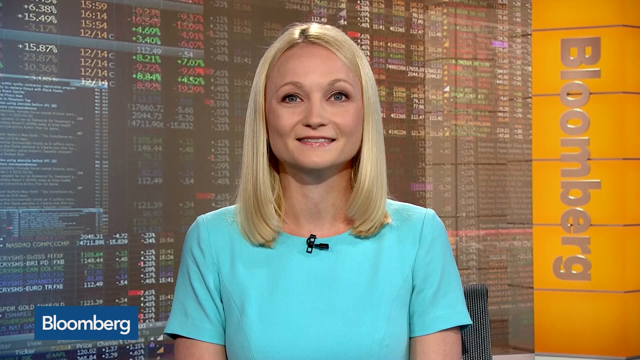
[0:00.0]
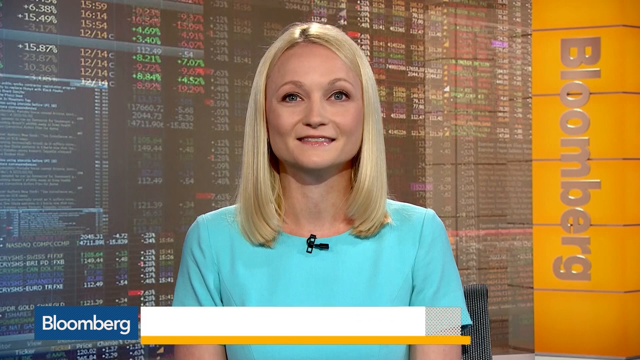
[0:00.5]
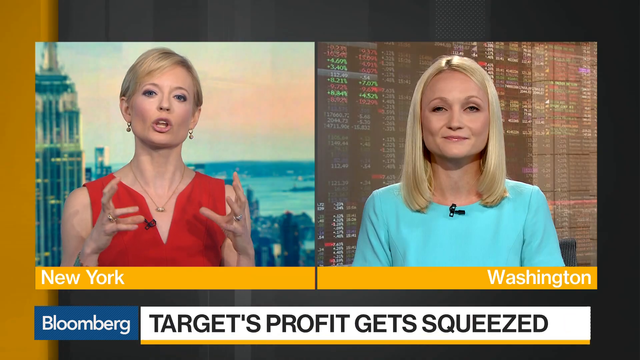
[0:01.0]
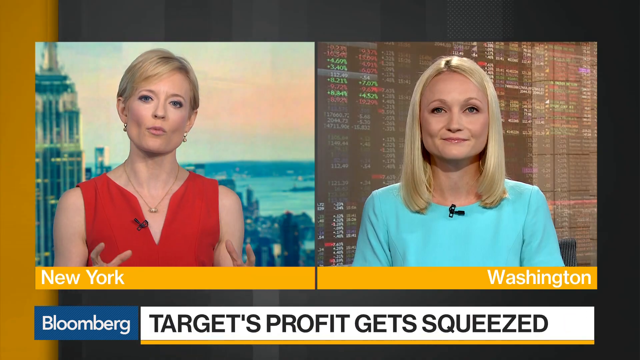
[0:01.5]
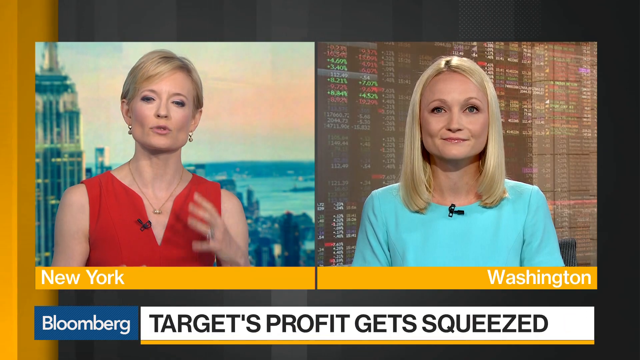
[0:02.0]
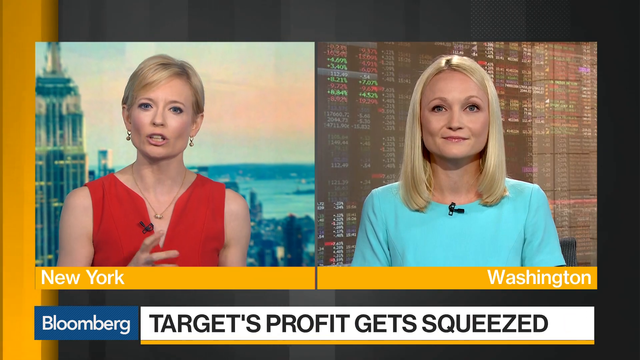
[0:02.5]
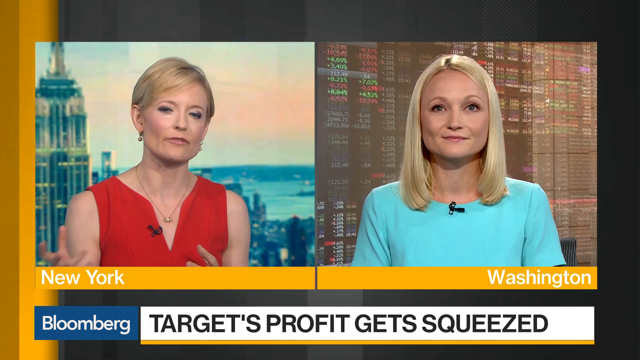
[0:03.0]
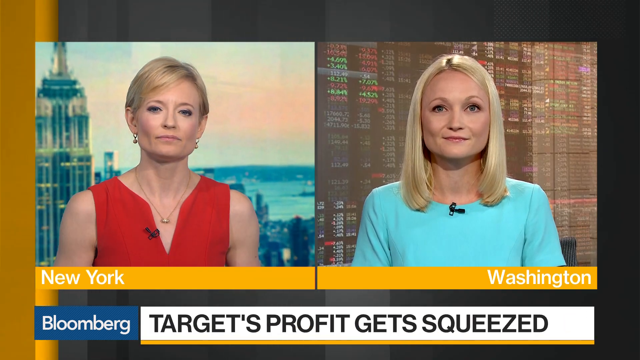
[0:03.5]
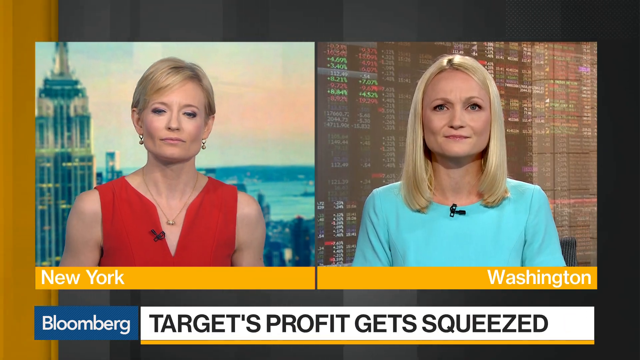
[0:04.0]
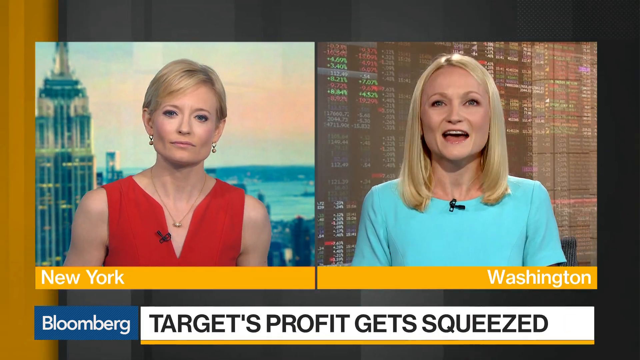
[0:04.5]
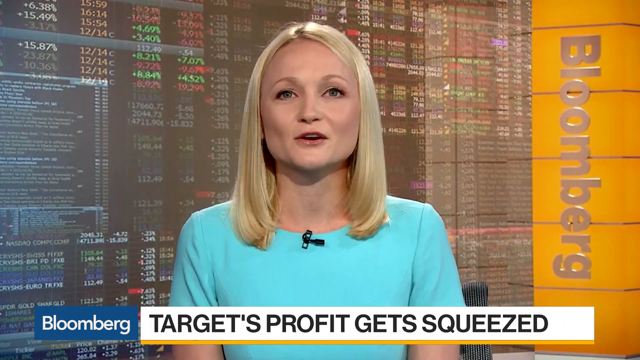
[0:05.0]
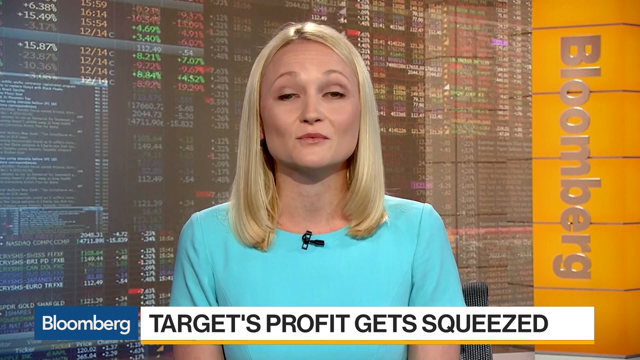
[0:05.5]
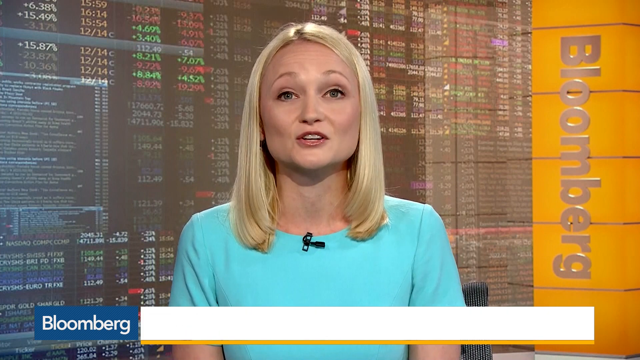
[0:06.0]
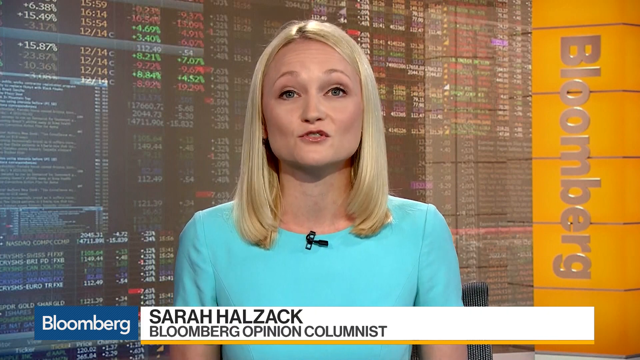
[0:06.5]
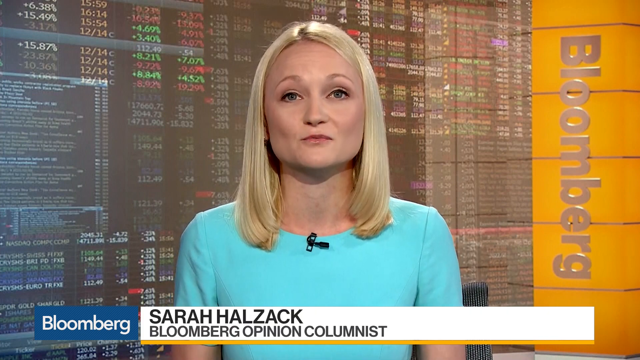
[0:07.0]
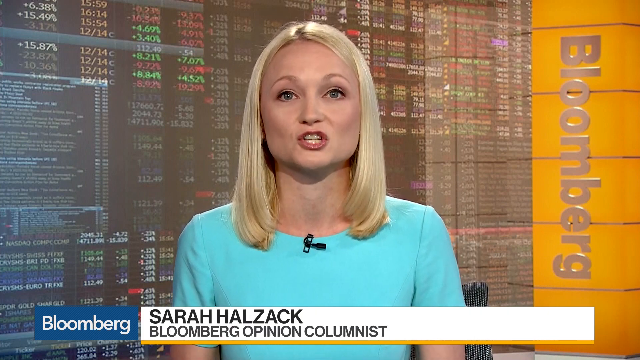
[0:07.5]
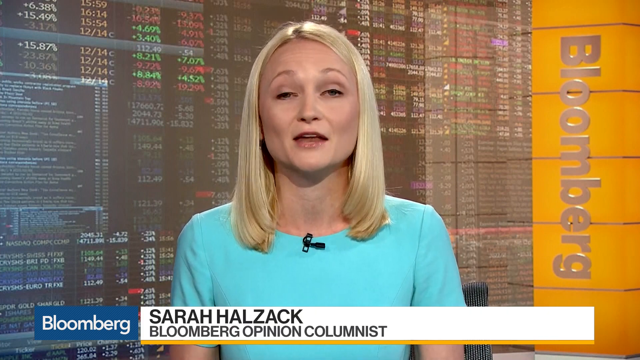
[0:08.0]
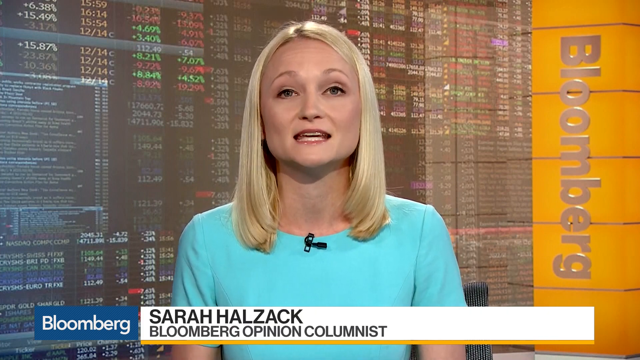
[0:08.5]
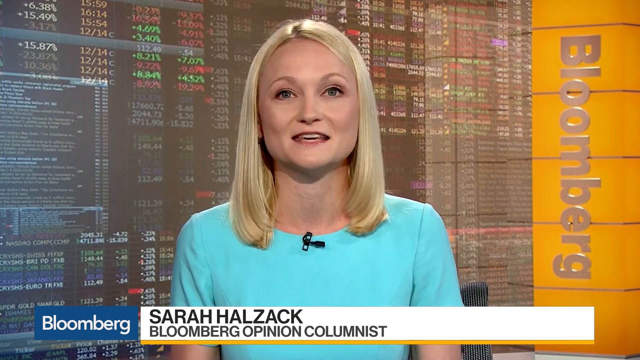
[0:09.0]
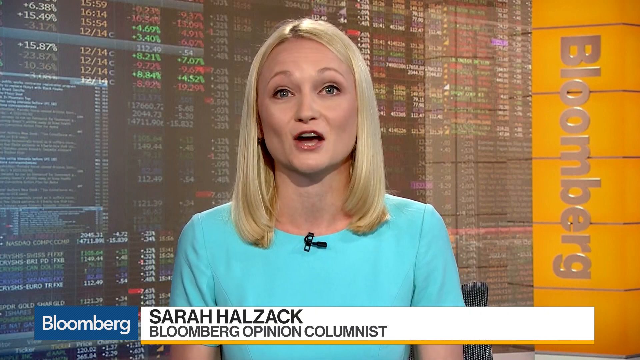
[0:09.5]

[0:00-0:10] The video starts in New York with the Bloomberg report, and the on-screen message reads "targets, profits get squeezed." Two anchorwomen are on the screen. On the left is a woman with short blonde hair in a red sleeveless dress; the background behind her appears to be a river and a cityscape. She speaks to another woman anchor, who wears a light blue dress, has blonde shoulder-length hair, and has stock market reports or grids on a screen behind her. The two talk back and forth. The shot then moves to the woman with blonde shoulder-length hair in the room with the stock market behind her; her name is Sarah Halczak. She speaks directly to the camera and has a small black microphone pinned to her dress. On-screen text identifies her as a Bloomberg columnist, and she is apparently going over some sort of financial report.